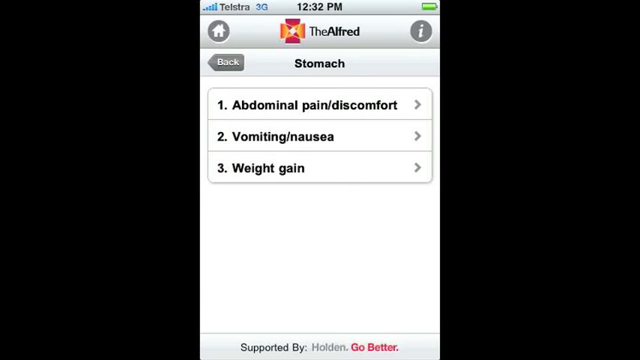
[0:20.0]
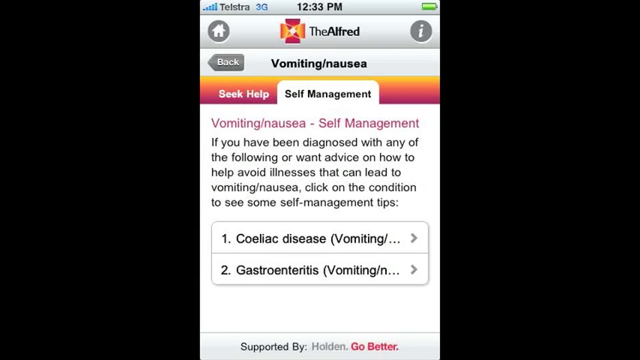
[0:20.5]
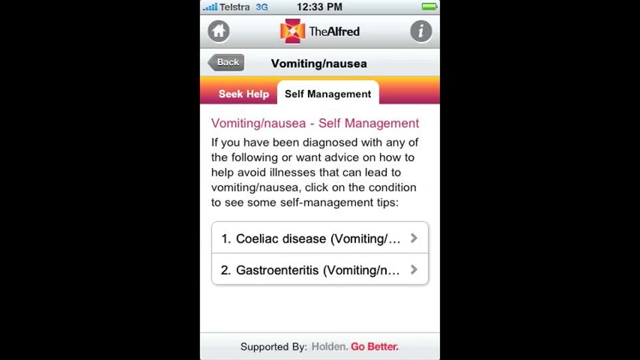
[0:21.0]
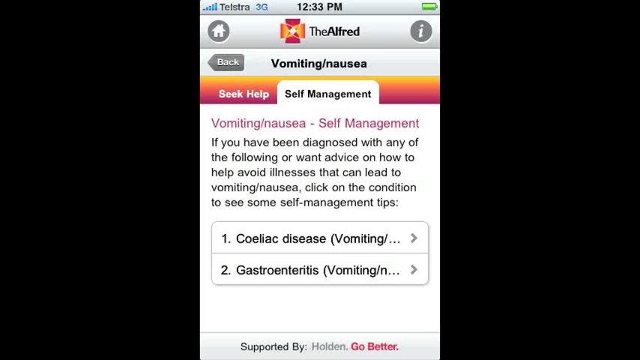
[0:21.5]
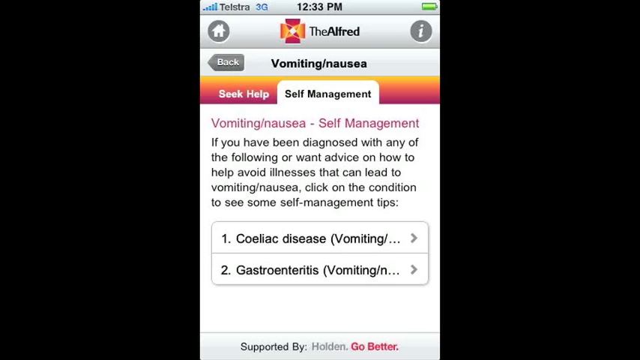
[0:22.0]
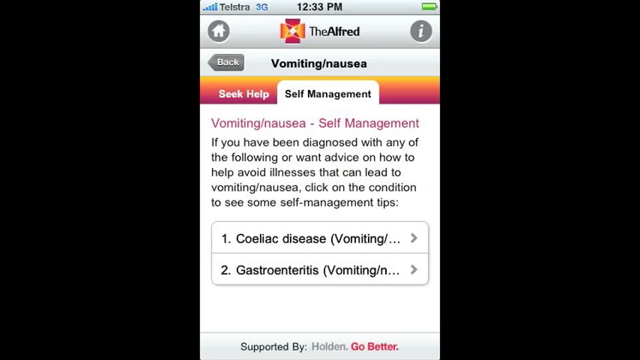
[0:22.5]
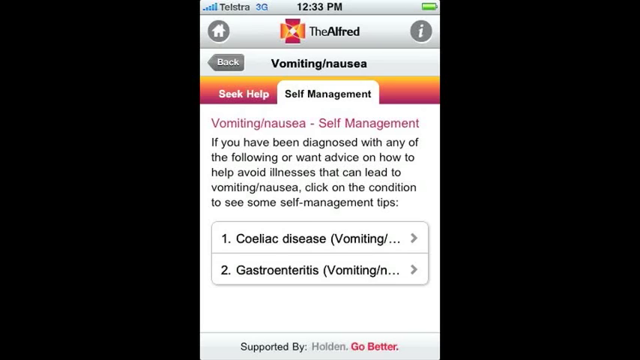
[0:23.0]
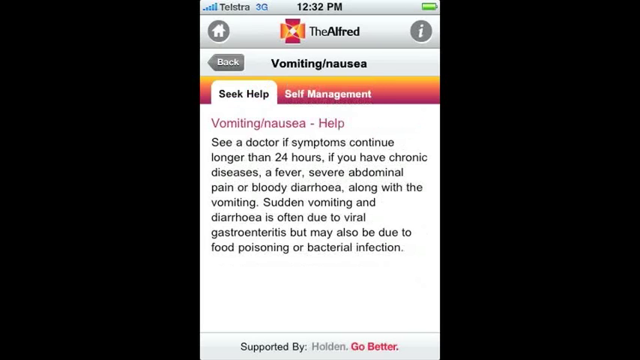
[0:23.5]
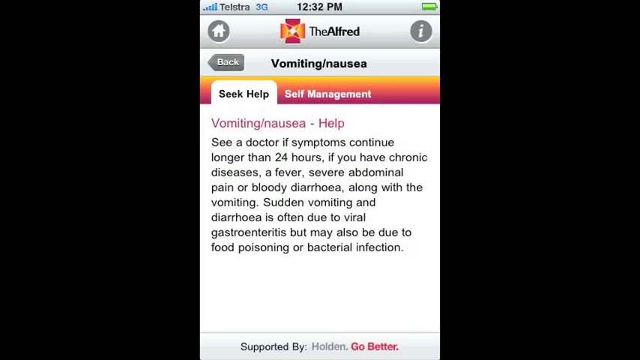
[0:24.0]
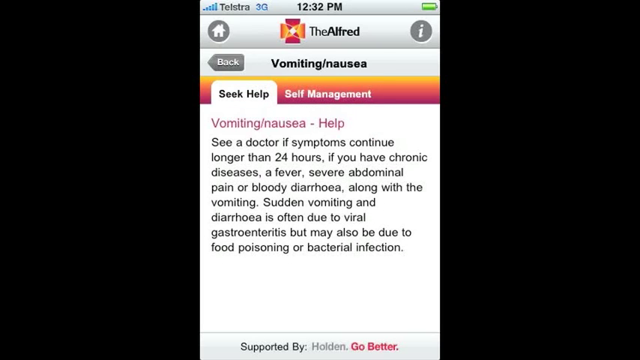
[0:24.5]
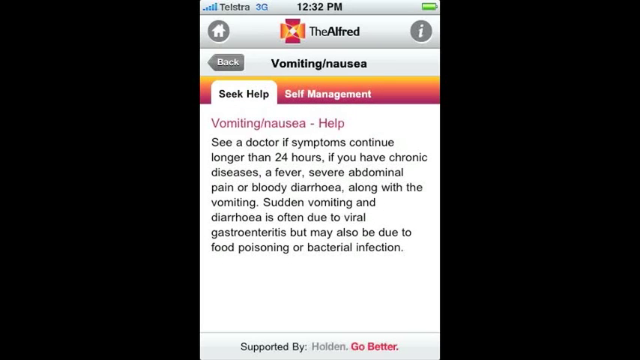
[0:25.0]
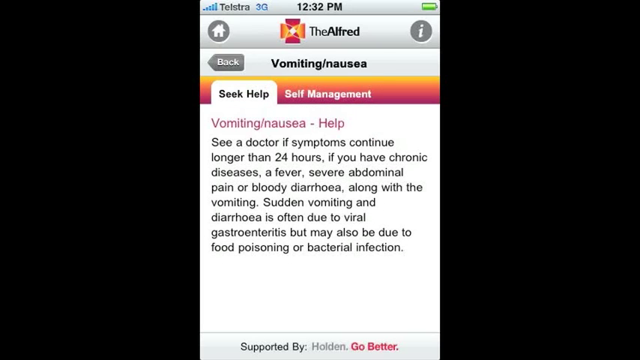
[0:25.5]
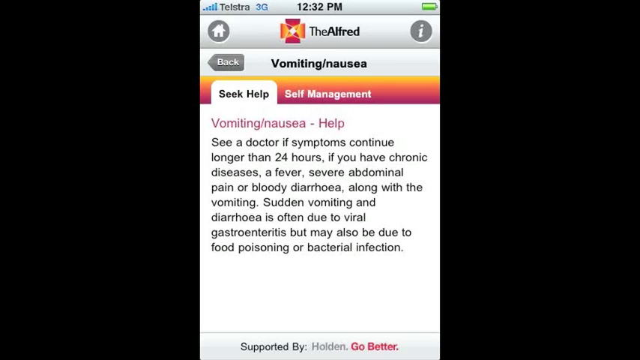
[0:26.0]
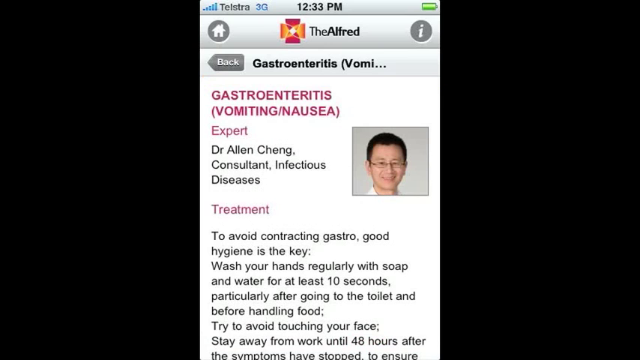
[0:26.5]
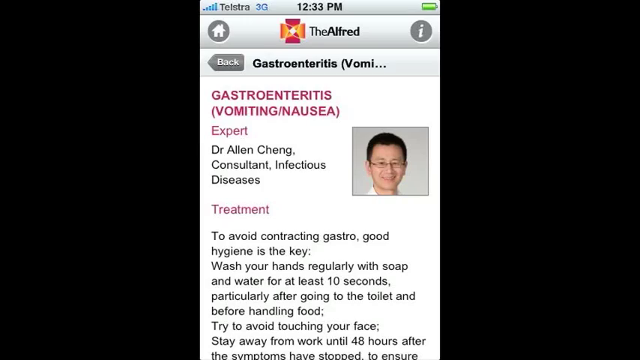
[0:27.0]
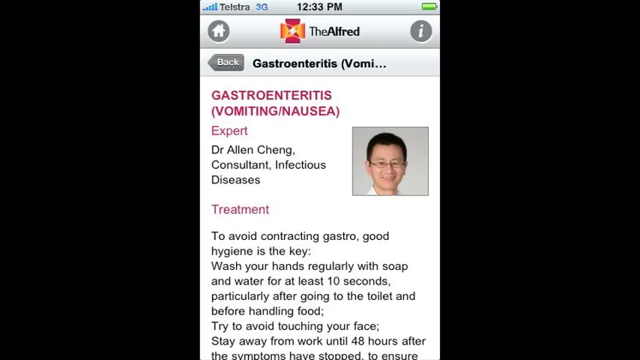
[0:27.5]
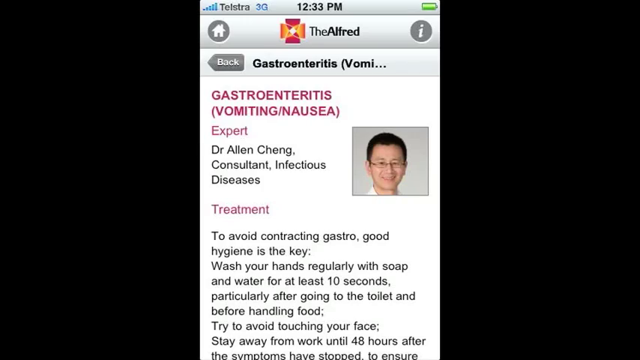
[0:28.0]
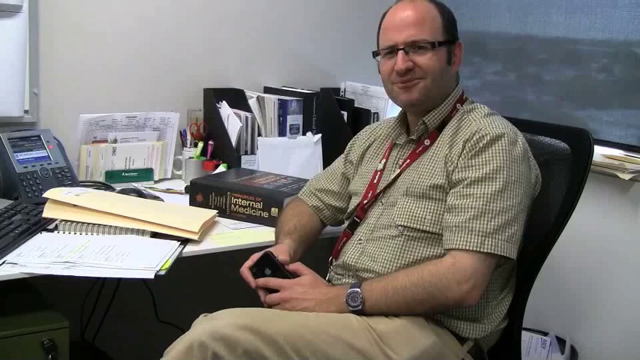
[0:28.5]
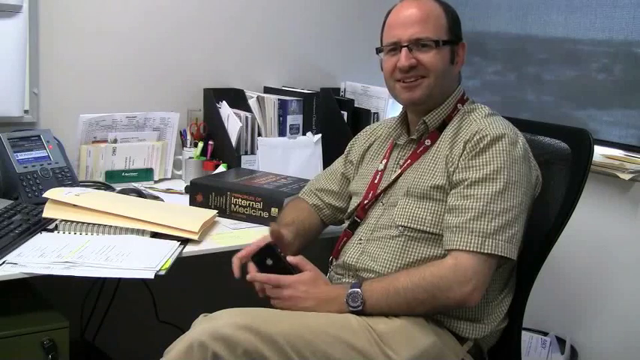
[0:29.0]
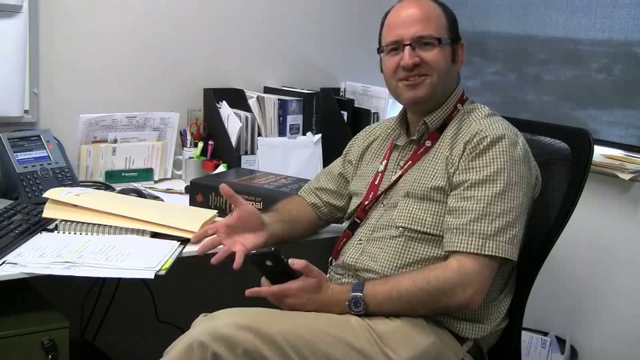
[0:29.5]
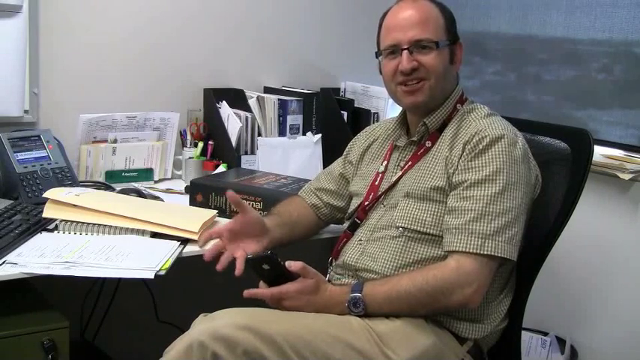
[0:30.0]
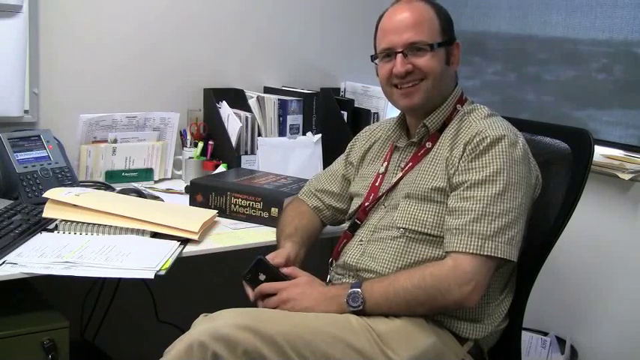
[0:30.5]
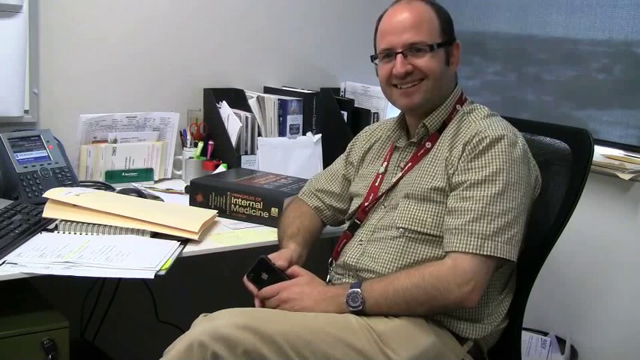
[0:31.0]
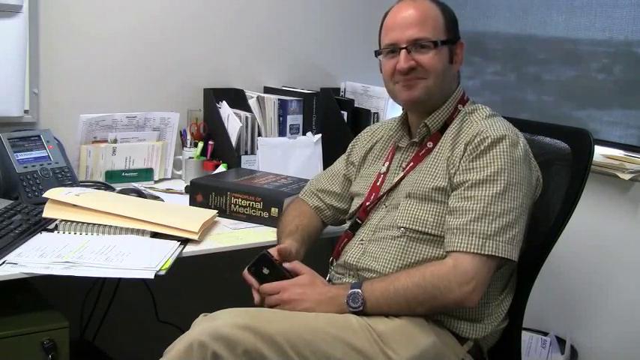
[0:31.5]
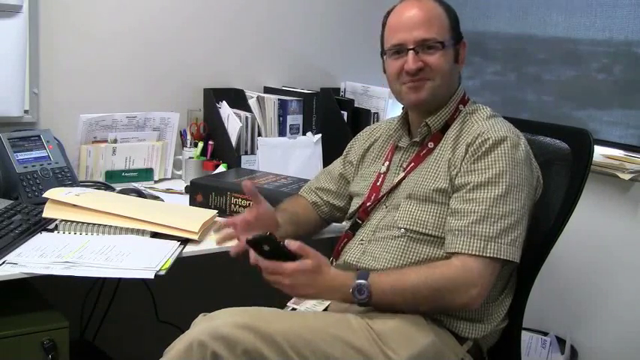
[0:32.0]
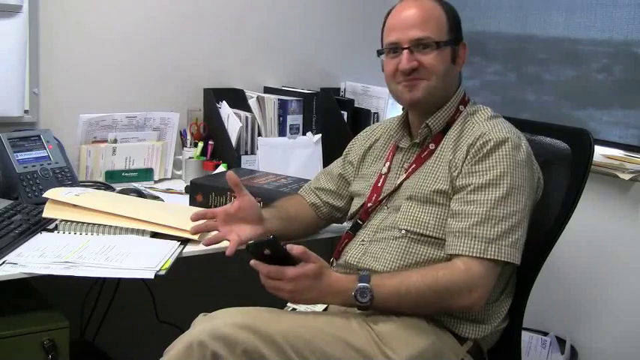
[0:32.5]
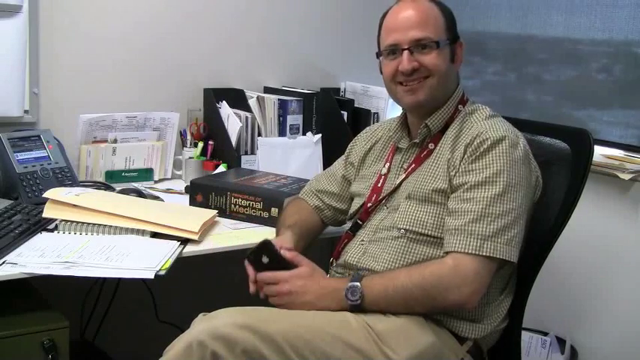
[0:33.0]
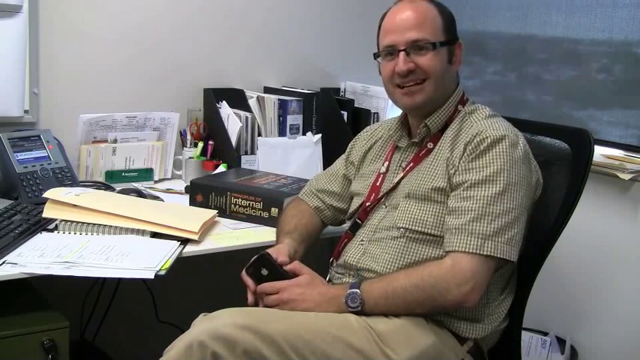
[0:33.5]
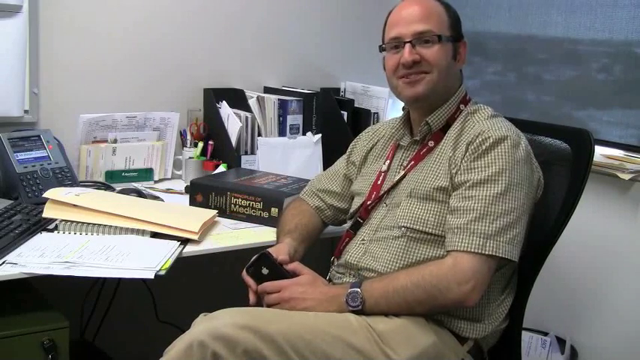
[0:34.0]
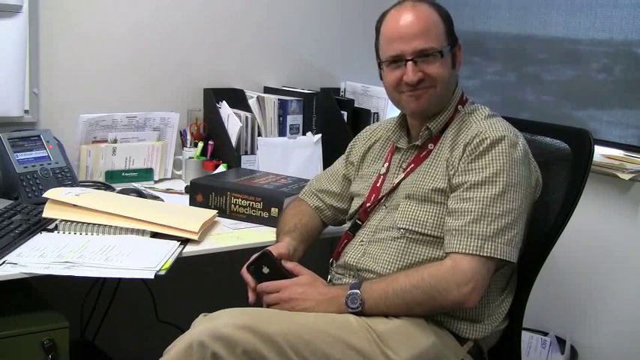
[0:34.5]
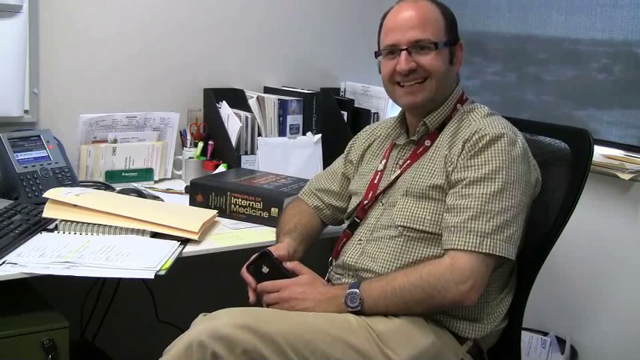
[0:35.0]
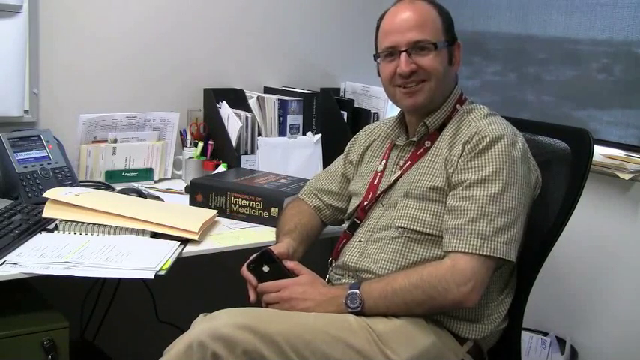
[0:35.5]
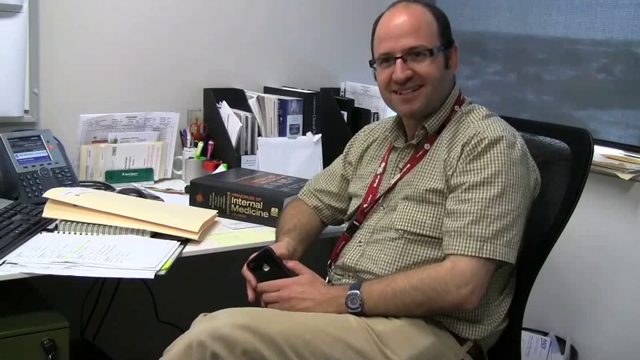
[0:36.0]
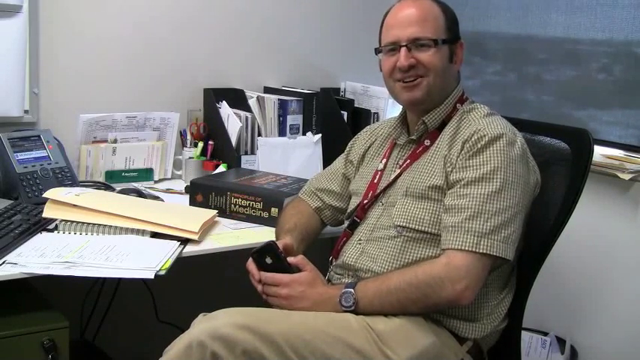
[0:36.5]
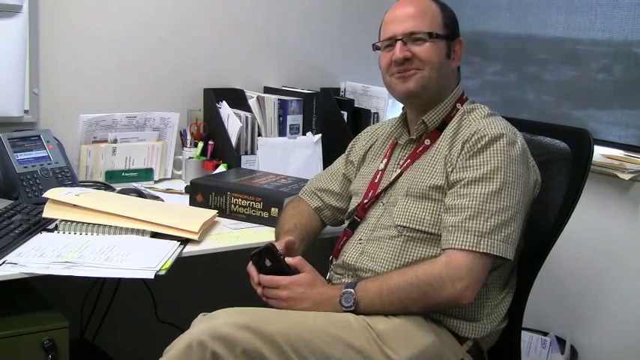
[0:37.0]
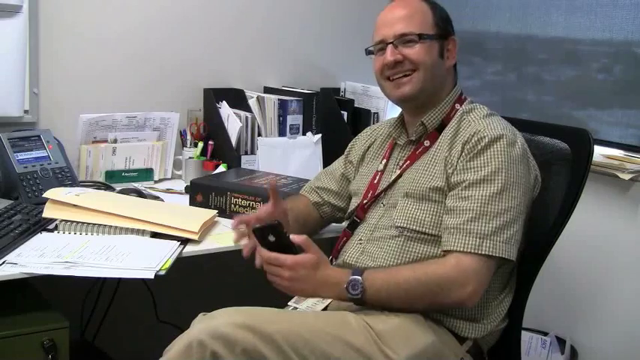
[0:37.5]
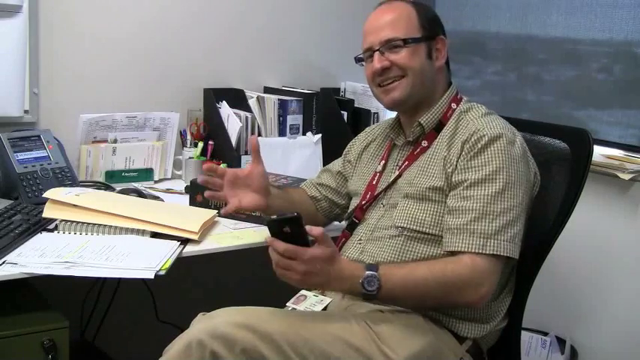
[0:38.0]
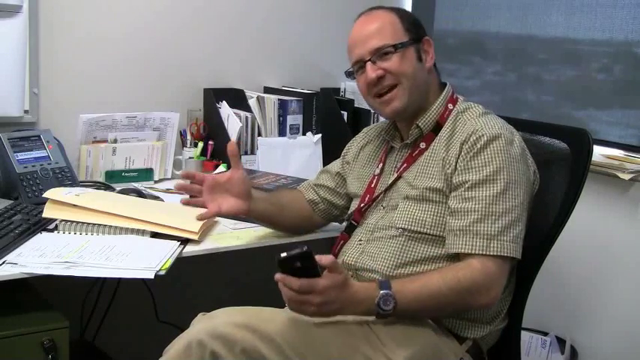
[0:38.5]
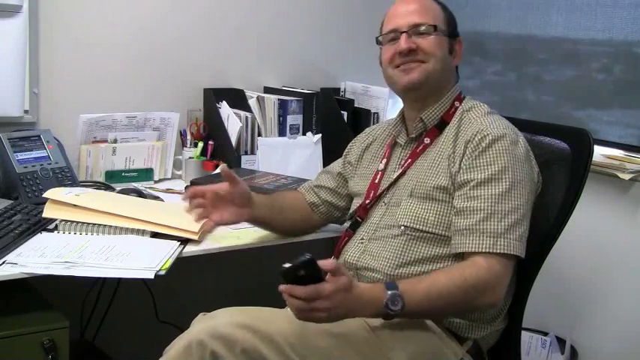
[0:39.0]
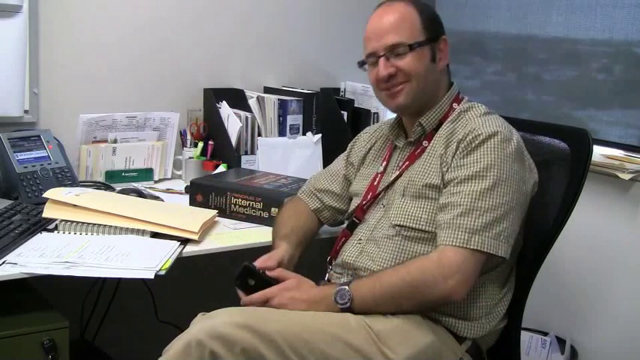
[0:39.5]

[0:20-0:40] A mobile webpage is on screen. At the top left is the phone's signal-strength bar symbol, apparently with five bars in total, along with the name "TELSTRA" and "3G" next to it. At the top middle the time reads "12.32 p.m.", and at the top right the battery level is full and green. On the webpage itself, the brand, the Alfred, is at the top middle with a red and orange logo to its left and, to its right, an eye symbol that looks like it is for information. A little house icon is at the top left. Below, three categories for stomach appear: "abdominal pain discomfort", "vomiting nausea" and "weight gain", separated by thin lines inside a box. The page changes so that the top is focused on vomiting and nausea, with "vomiting nausea self-management" below in pink and two categories, "colic disease" and "gastroenteritis". The scene changes again as "seek help" is selected. It then quickly cuts back to the man sitting in the chair. He lifts his right hand before putting it back on his phone. As he talks to someone off camera, he lifts his right hand in the air again, shaking his head slightly and nodding while keeping a smile on his face. He lifts his right arm in the air once more and moves it to the right.